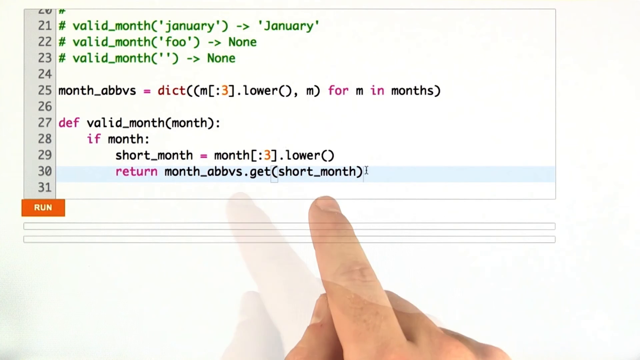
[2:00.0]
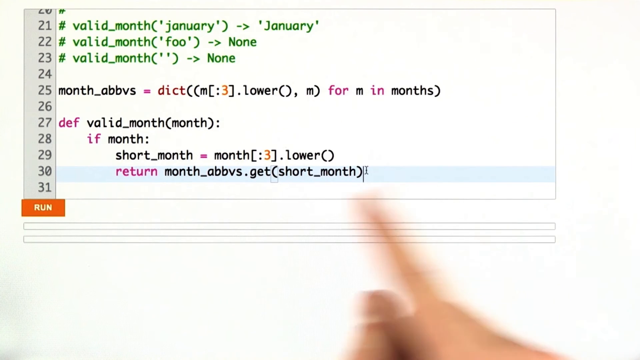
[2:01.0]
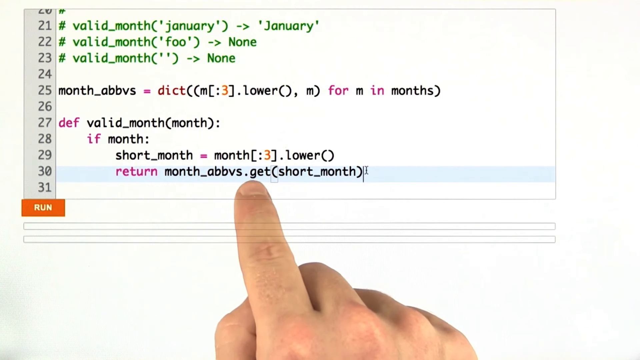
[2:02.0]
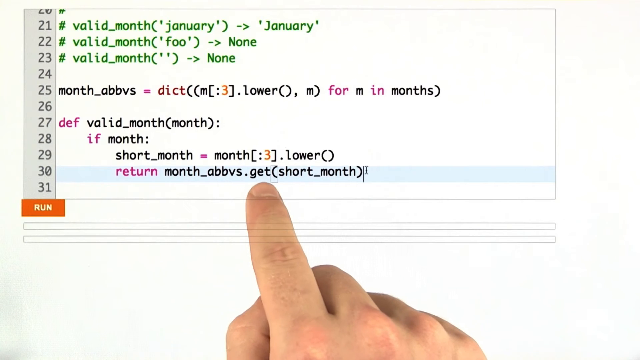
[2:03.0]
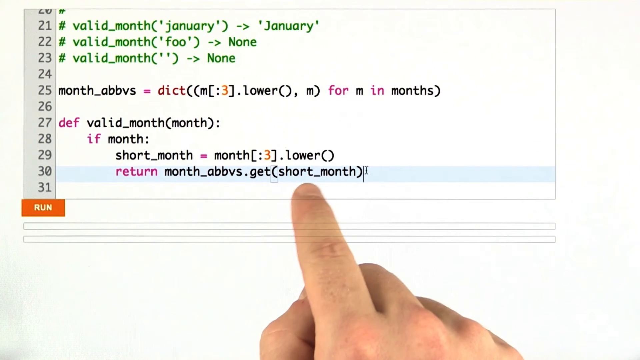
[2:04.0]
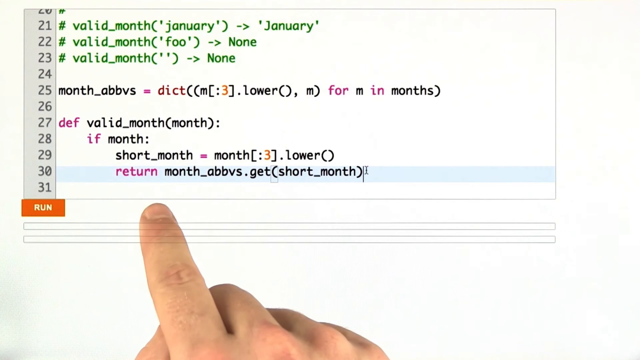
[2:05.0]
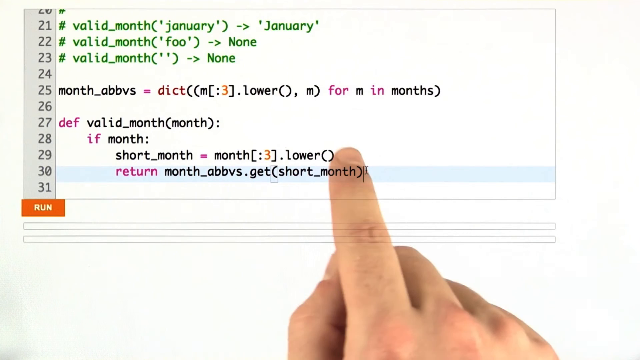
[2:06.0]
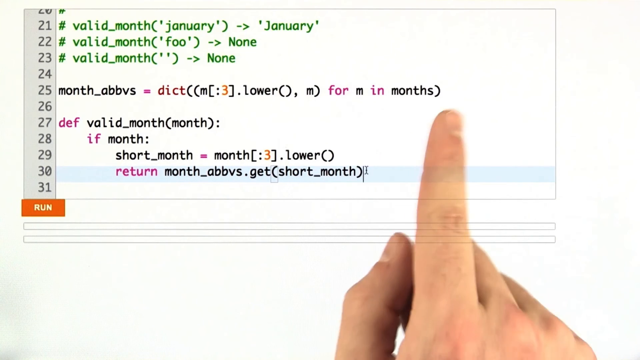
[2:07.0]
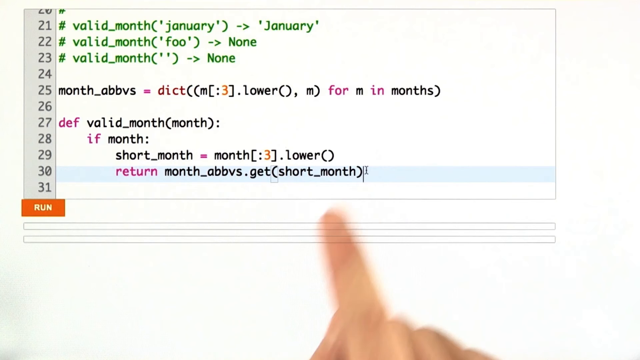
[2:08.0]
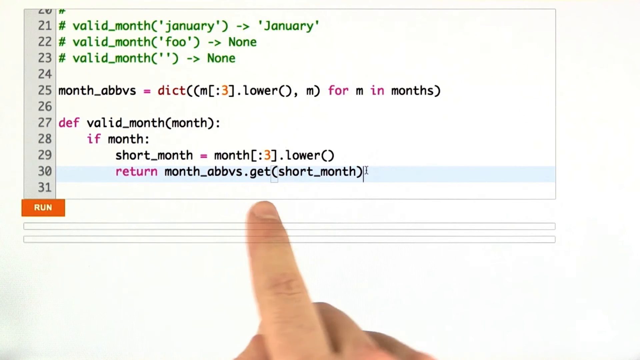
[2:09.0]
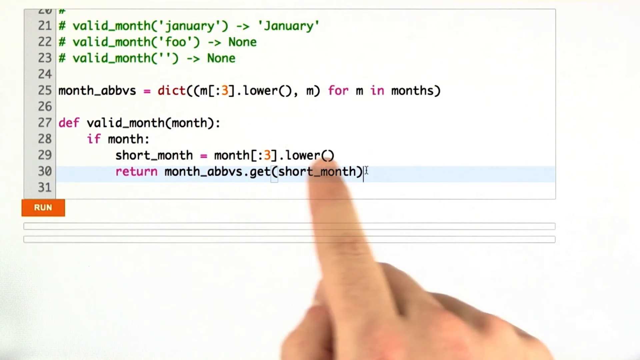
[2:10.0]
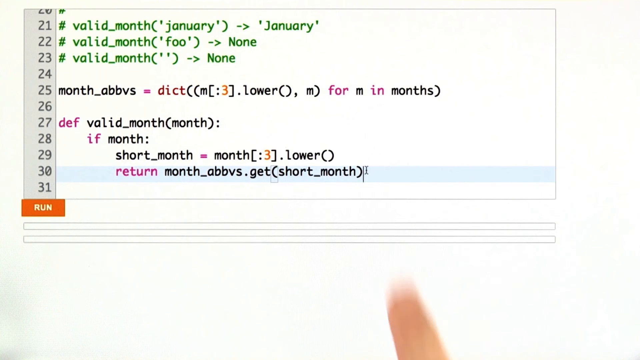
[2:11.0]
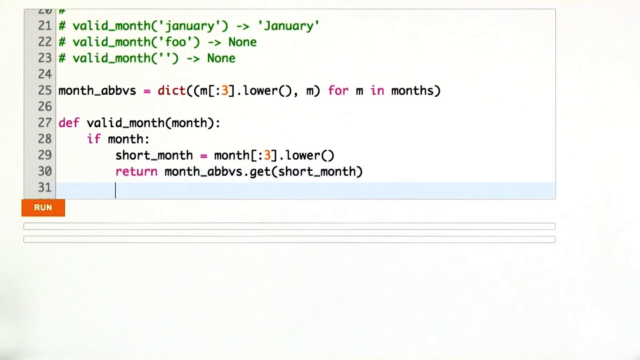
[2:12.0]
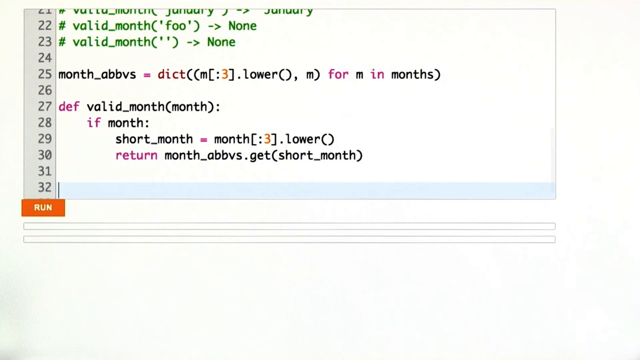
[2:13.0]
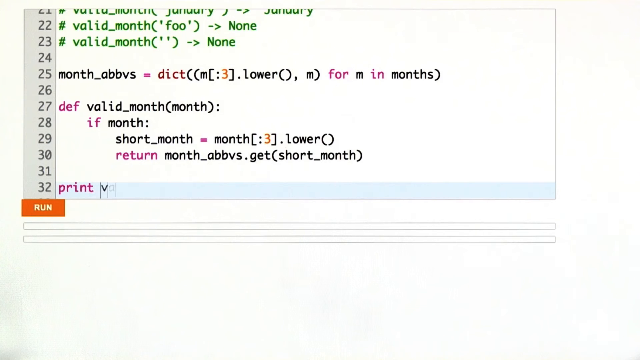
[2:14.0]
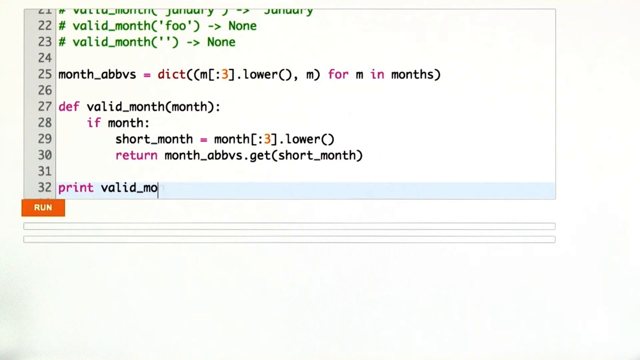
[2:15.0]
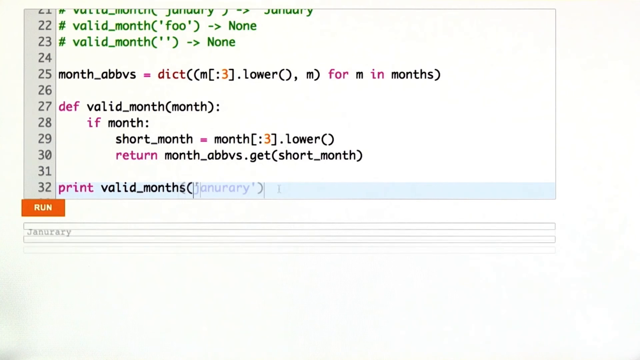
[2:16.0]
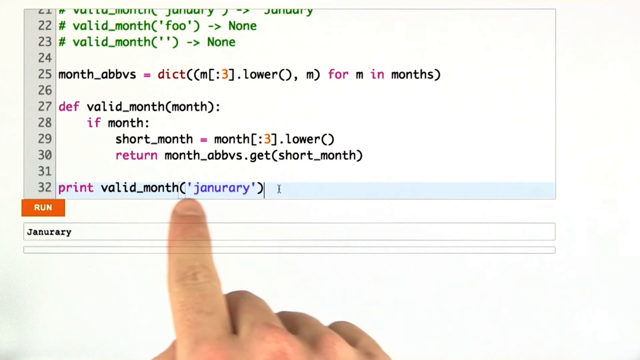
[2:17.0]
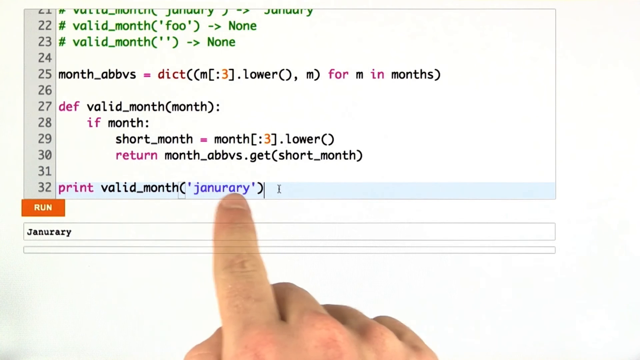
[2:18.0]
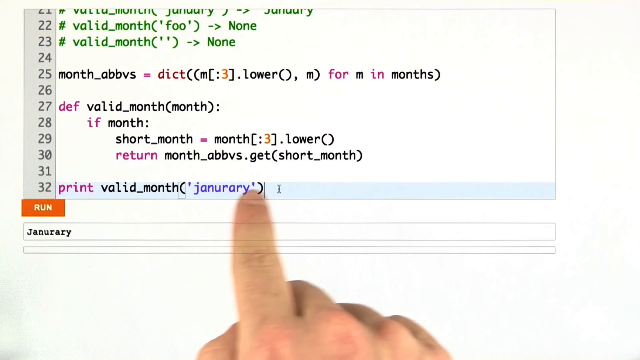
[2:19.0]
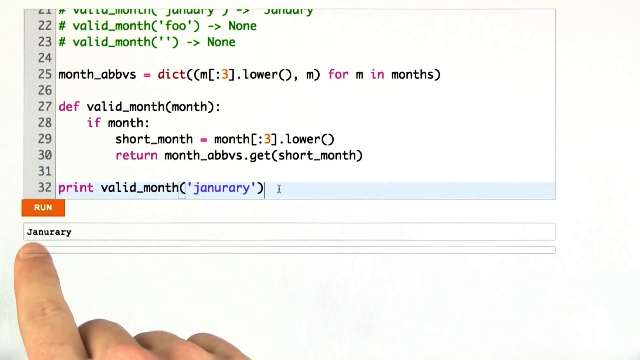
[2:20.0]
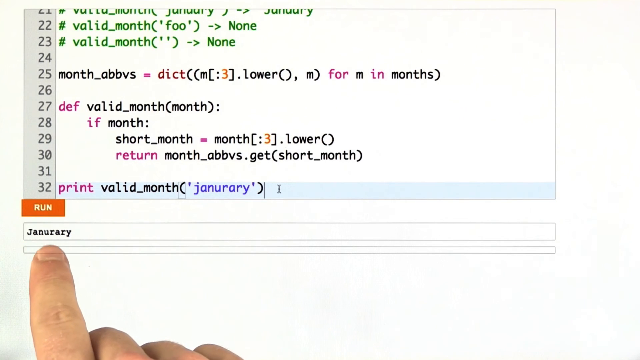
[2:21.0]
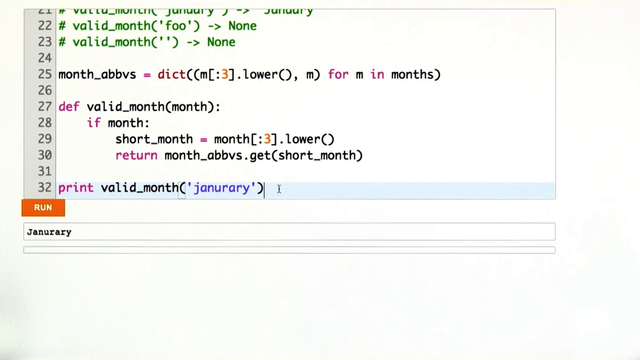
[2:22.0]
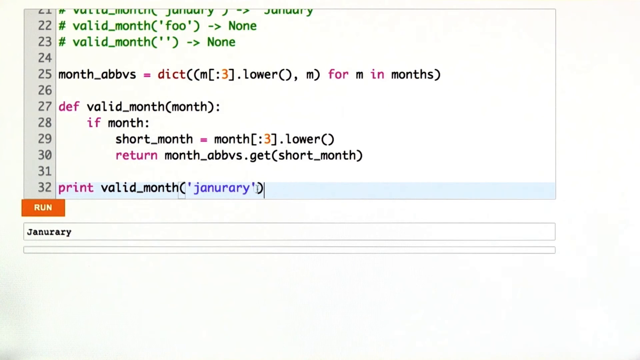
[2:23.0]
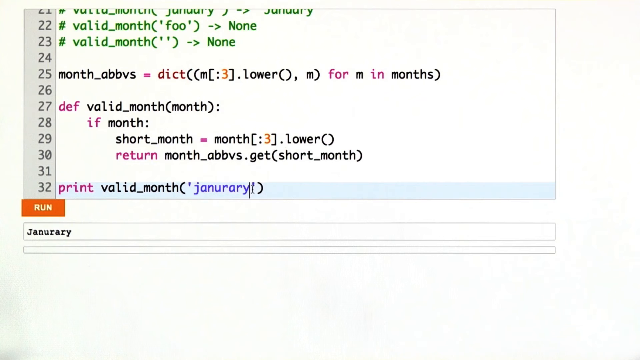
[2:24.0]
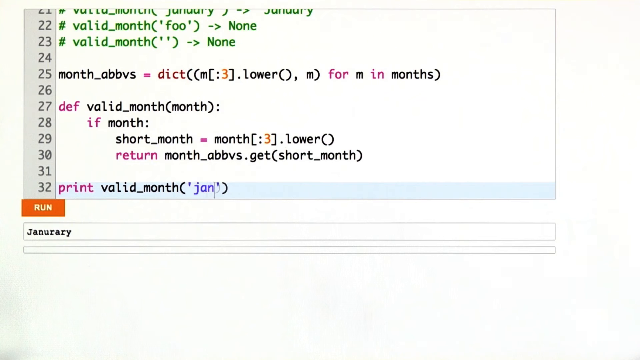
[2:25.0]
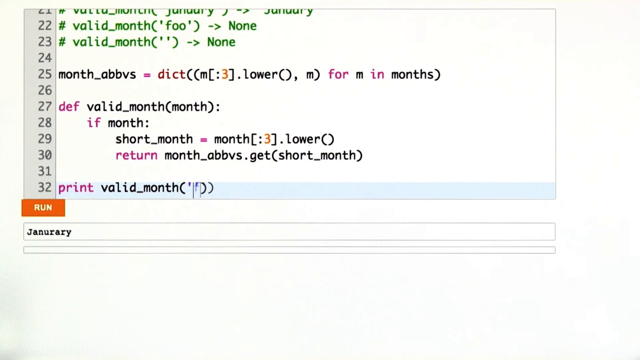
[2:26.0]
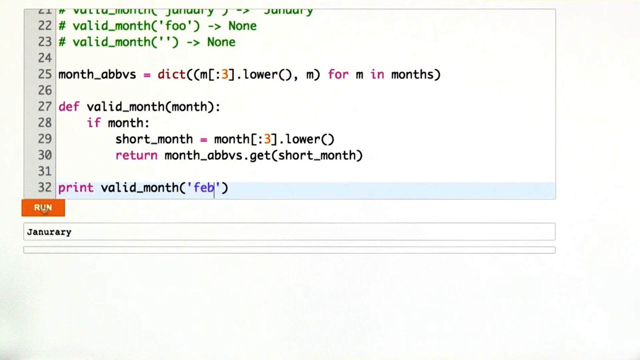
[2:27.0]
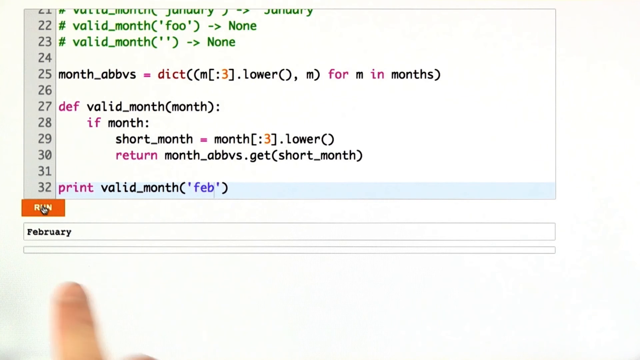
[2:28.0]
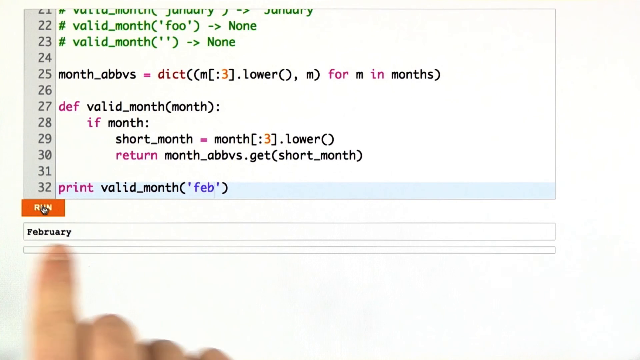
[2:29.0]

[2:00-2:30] A human hand with a black digital pen hovers over words in what appears to be programming about the months of the year and whether they are capitalized. The letters at the top of the screen, in rows 21, 22 and 23, are printed in green. Row 25 begins with "def" in pink, followed by "valid month" and "month" in parentheses in black. On the next line, the first word, "if", is in pink and the second, "month", is in black. Line 27 reads "cap month equals month capitalized." On the next screen, all the months are listed in purple, and the black pen hovers over them from January to December. On the following screen the pen is put down and the hand's index finger hovers over different words. At the very bottom, the months of the year are printed in much smaller font, and the finger seems to hover over them, moving back and forth between areas. An orange button that says "run" is at the bottom left-hand corner and is not touched on this screen. The finger continues over everything listed on the screen. On line 32, "print valid month" is typed out with January. The hand hits run for January, then goes back up, deletes January and types in February.